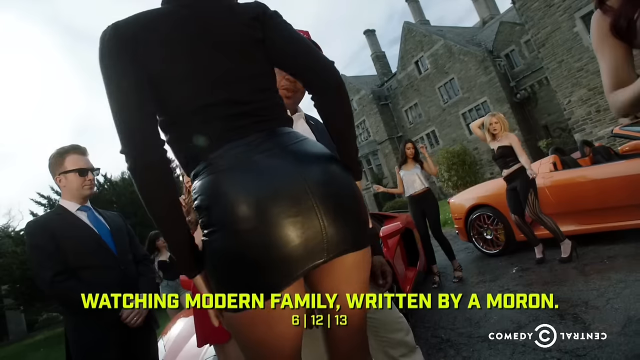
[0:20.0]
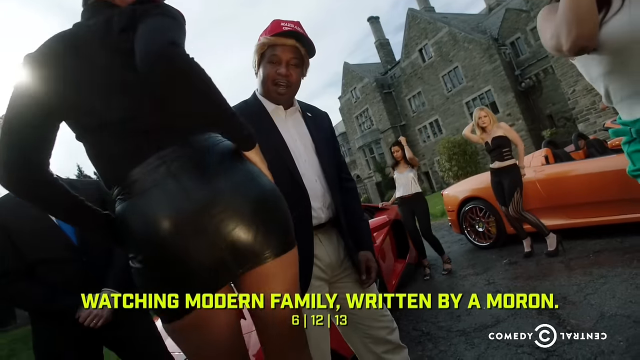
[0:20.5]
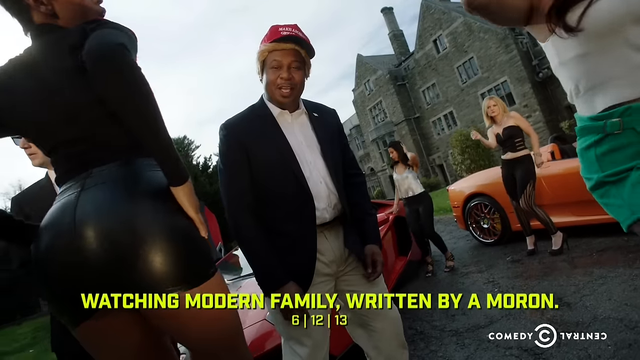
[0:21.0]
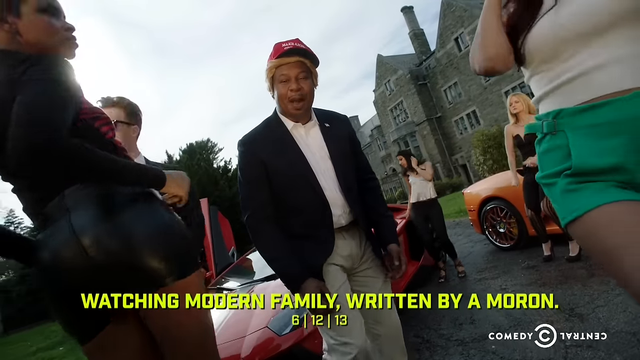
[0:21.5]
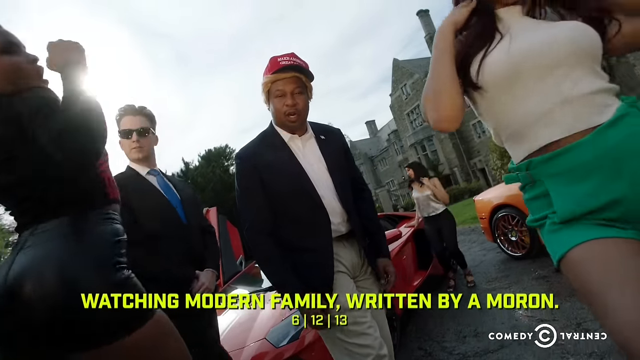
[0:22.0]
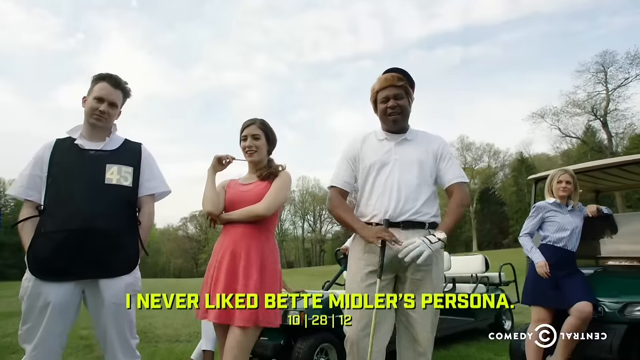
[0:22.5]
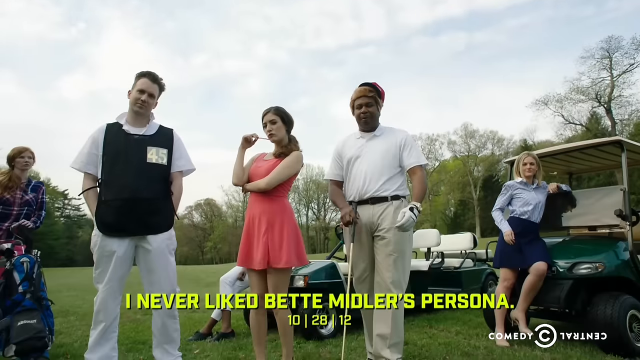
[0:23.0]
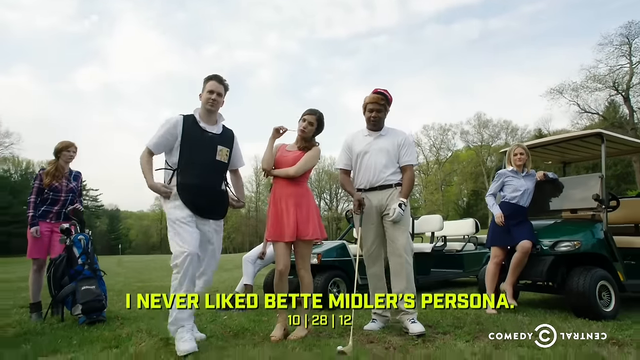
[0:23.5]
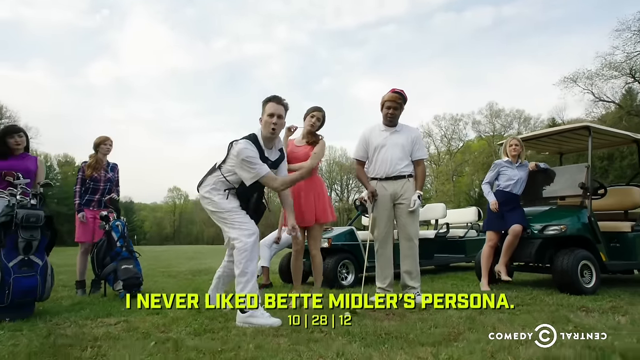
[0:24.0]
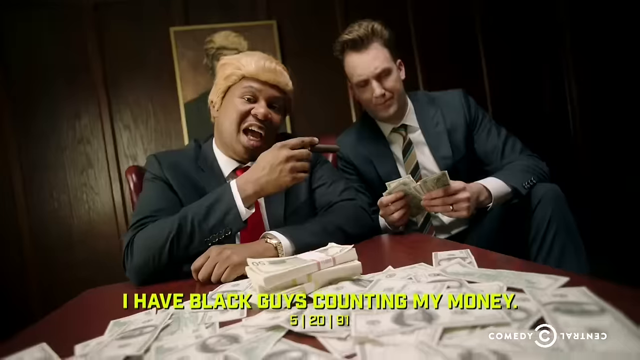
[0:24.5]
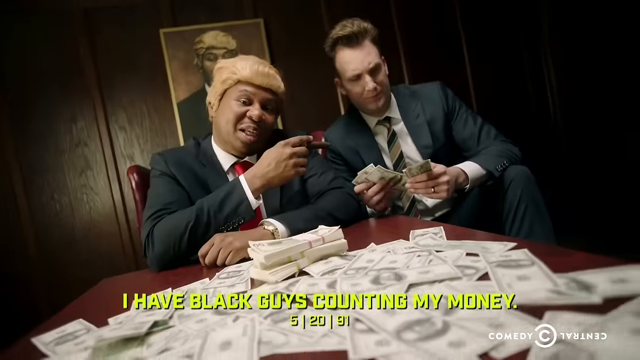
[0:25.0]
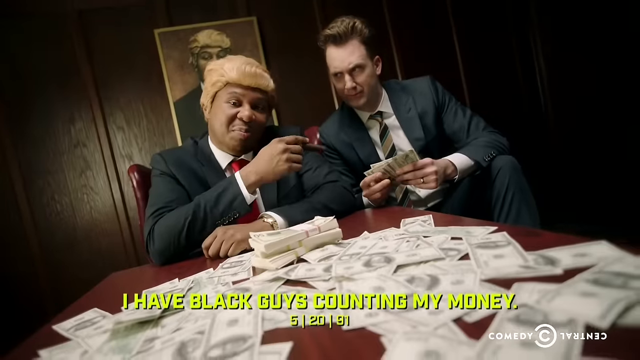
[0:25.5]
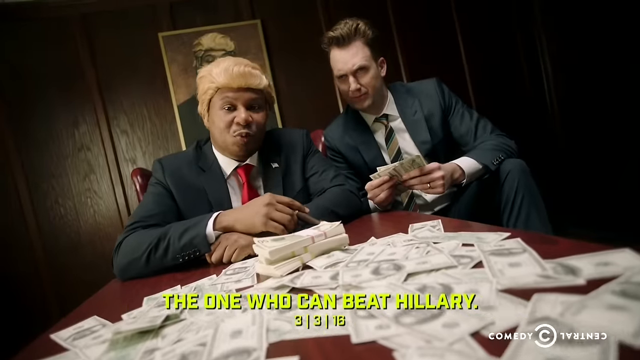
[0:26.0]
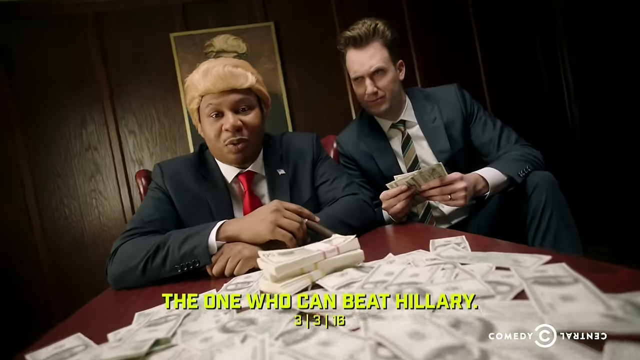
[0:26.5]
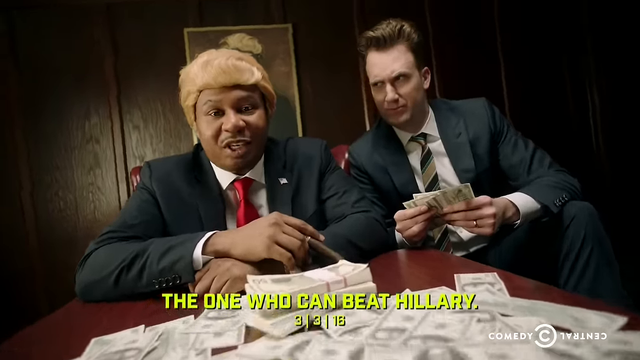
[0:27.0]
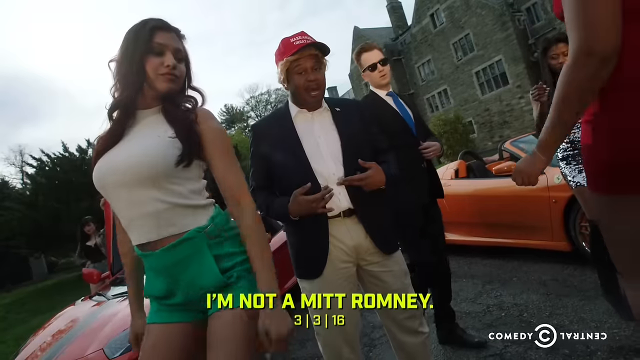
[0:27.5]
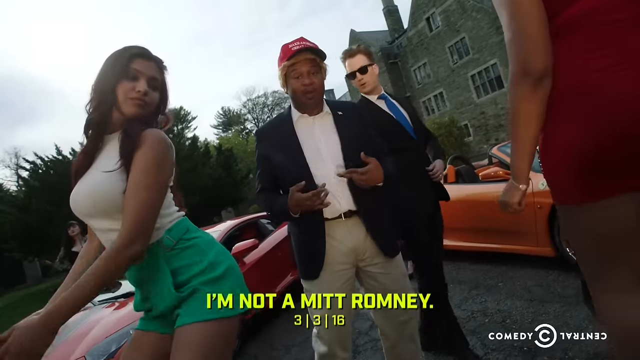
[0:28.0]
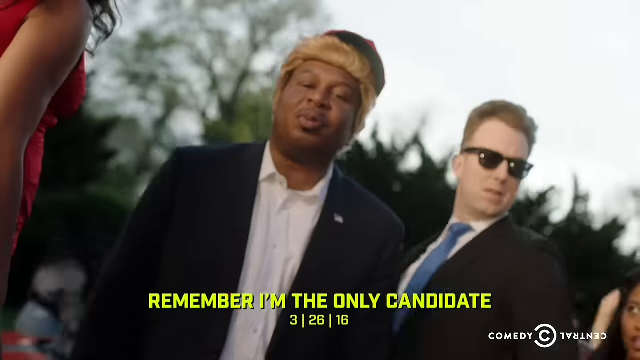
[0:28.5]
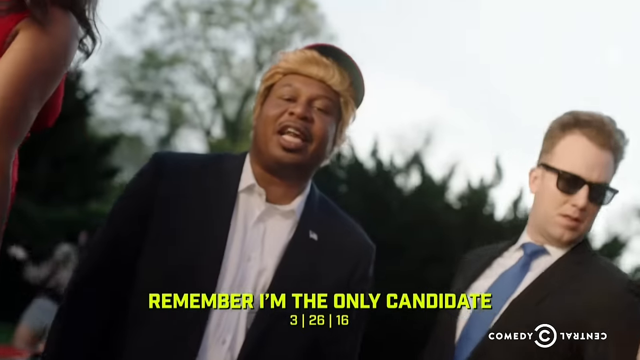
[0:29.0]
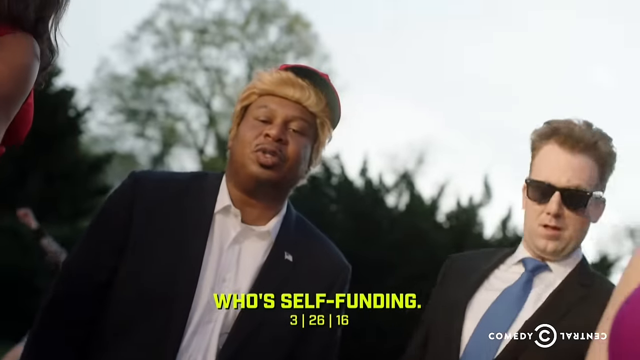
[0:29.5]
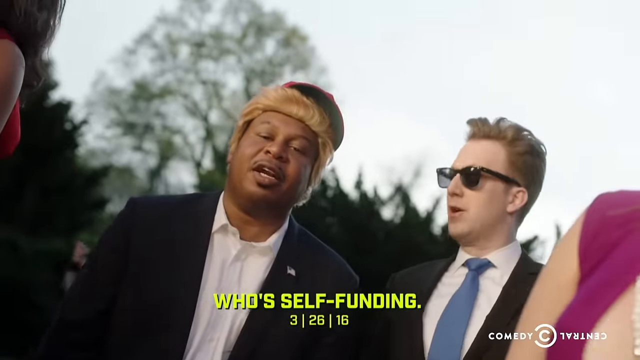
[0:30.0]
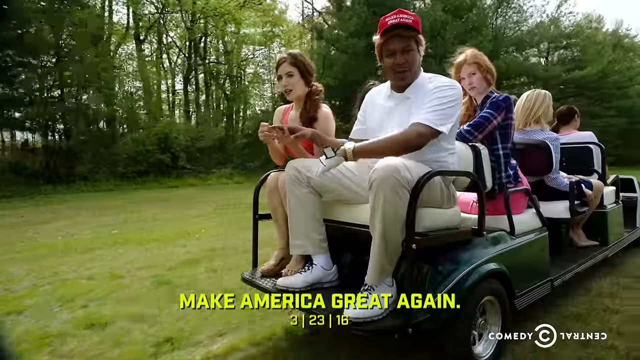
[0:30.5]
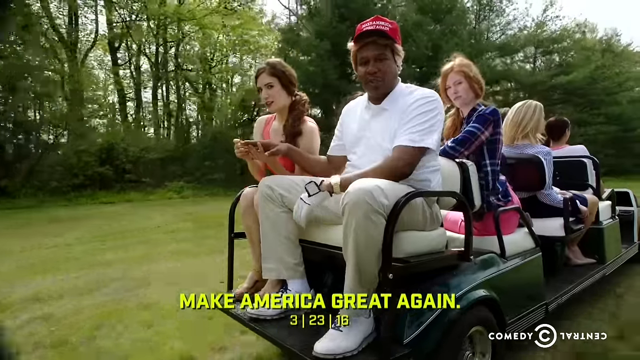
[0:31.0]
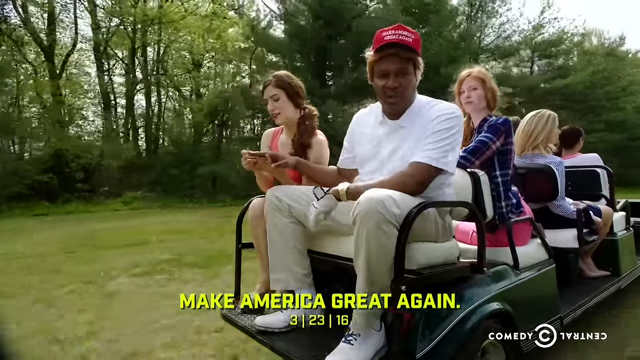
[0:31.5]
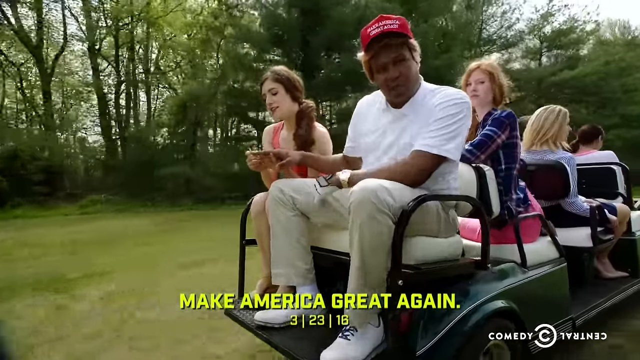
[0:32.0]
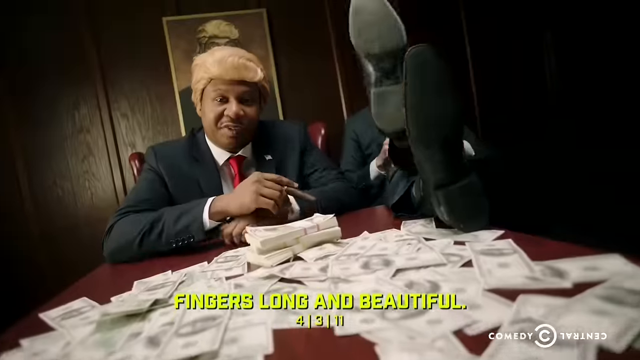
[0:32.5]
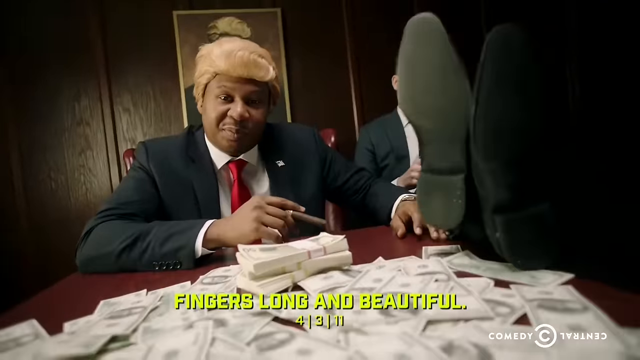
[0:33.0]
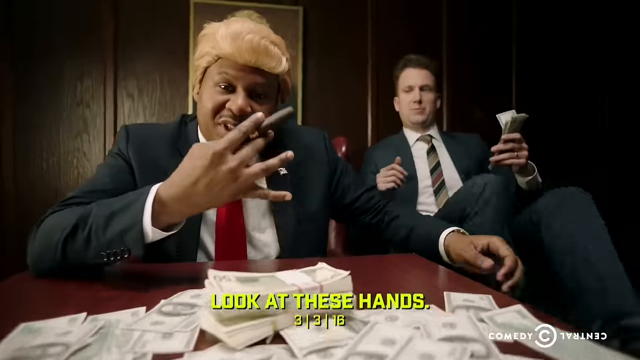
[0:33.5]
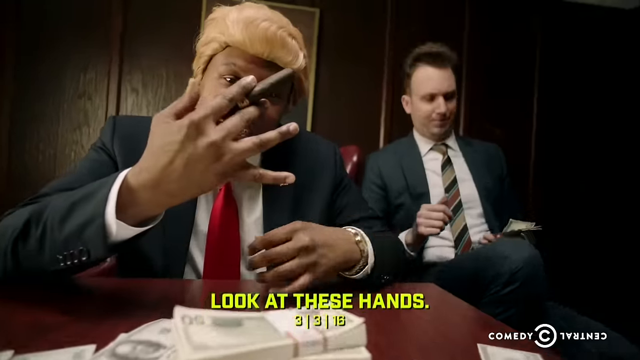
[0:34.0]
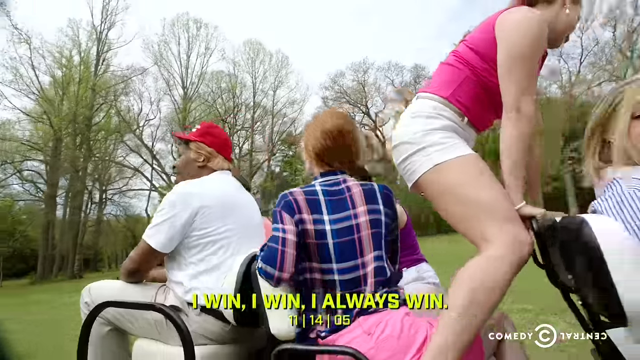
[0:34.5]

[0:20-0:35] Text at the bottom of the screen reads "he will make America great again, fingers long and beautiful, look at these hands, I win, I win, I never liked Betty Midler's persona, I have black guys counting my money, I'm not Mitt Romney." As he continues the rap, several scenes show women dancing along the cars. The video transitions to a scene of him golfing, where there appear to be several women in a cart and apparently a male alongside him acting as caddy; there are at least four golf carts. The video then pans to another scene in which Black Donald Trump is with what appears to be another male counting money on a table, both sitting in brown chairs. Black Donald Trump appears to be speaking to either the bodyguard or the man counting the money. The individual next to him appears relaxed, with his feet kicked up on the wooden table as he sits in the chair beside Black Donald Trump.